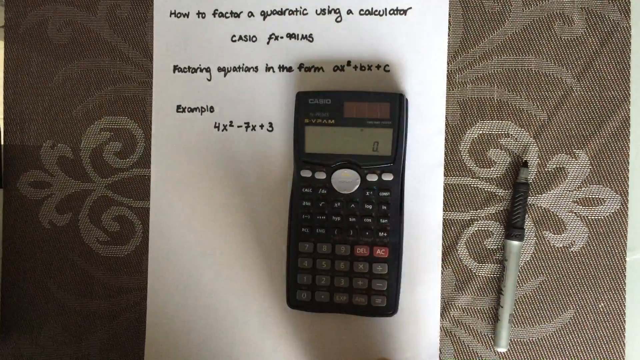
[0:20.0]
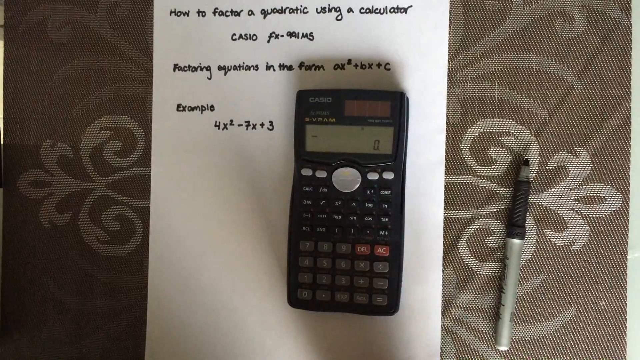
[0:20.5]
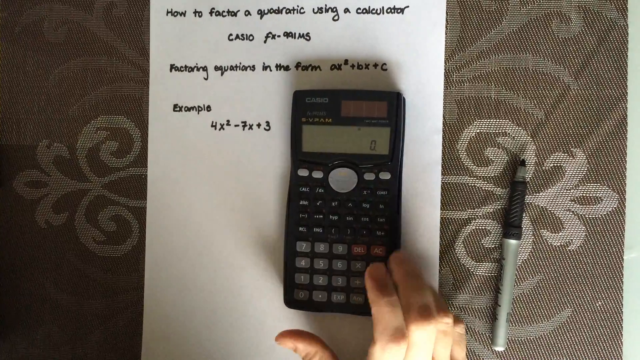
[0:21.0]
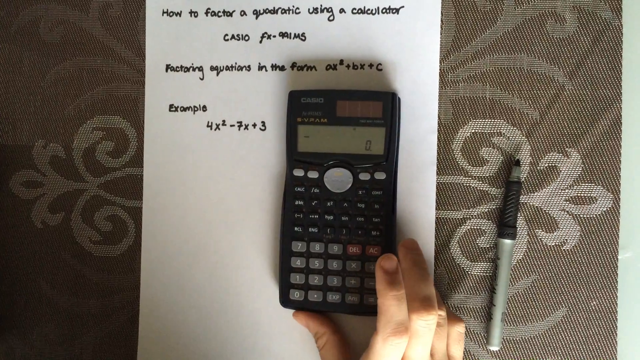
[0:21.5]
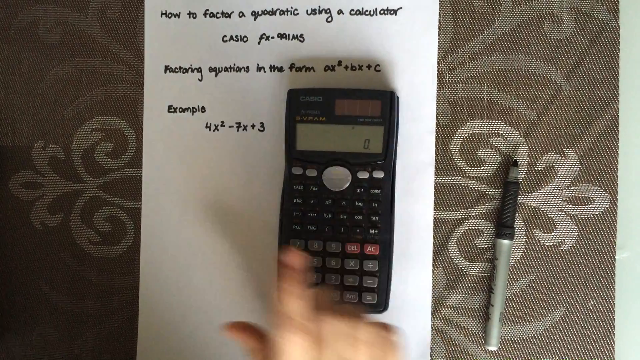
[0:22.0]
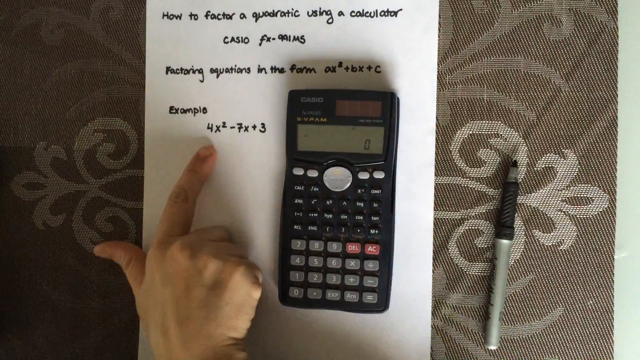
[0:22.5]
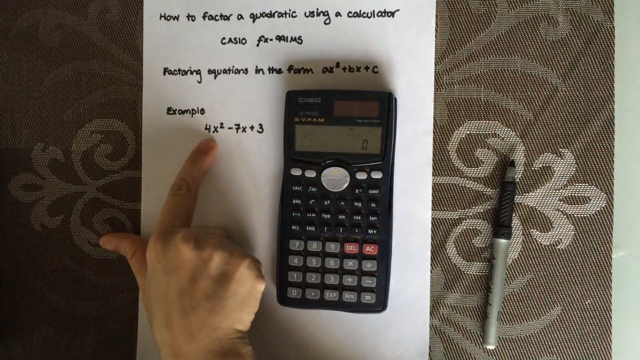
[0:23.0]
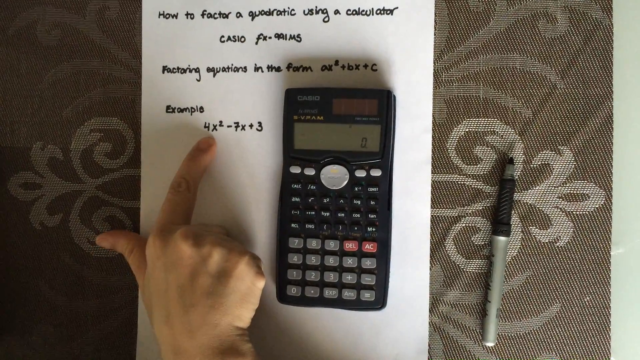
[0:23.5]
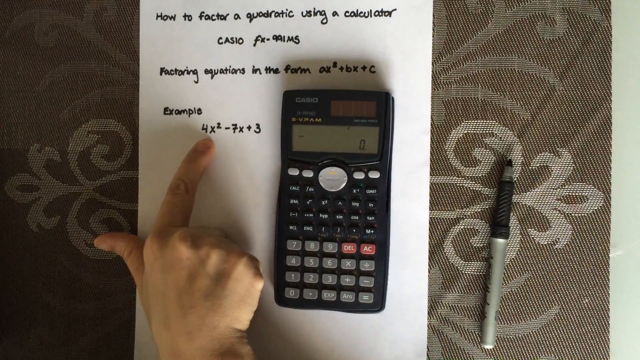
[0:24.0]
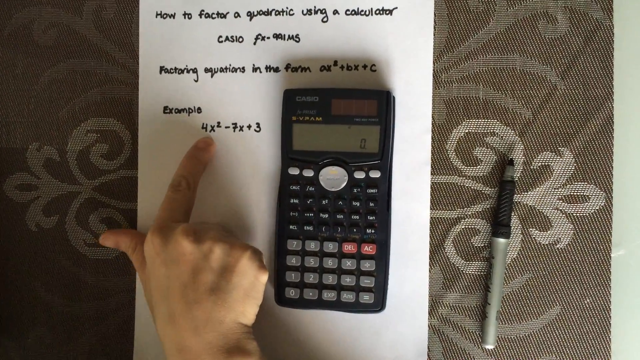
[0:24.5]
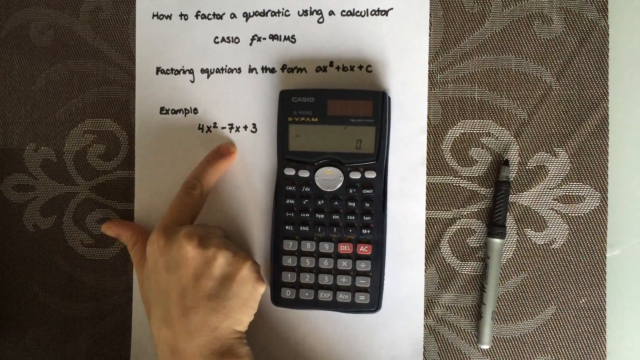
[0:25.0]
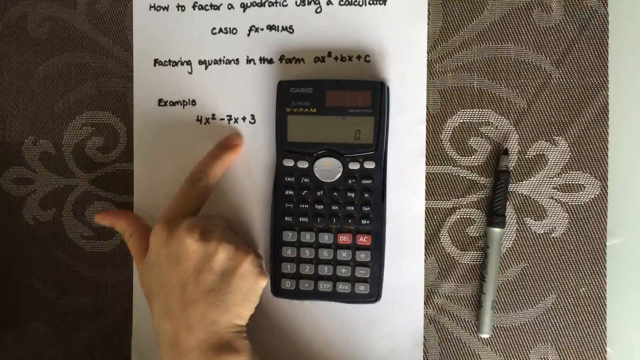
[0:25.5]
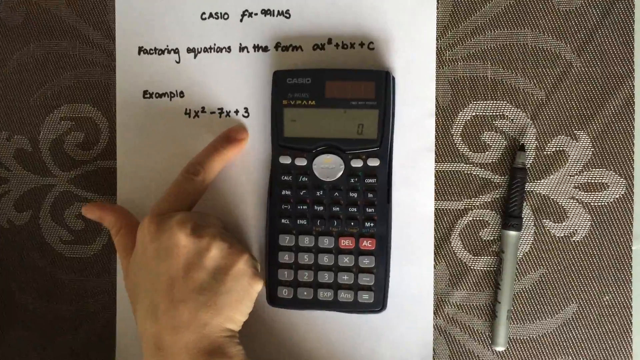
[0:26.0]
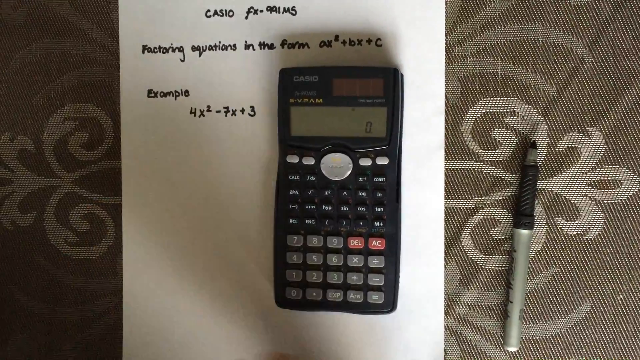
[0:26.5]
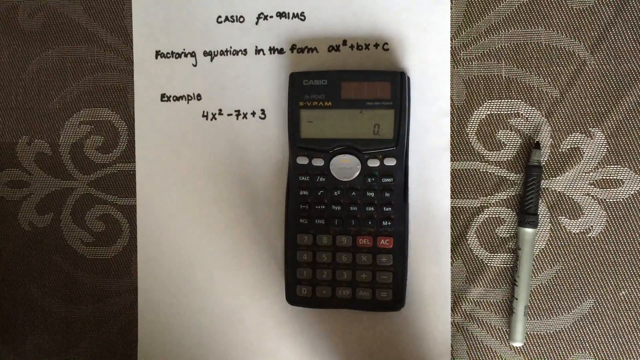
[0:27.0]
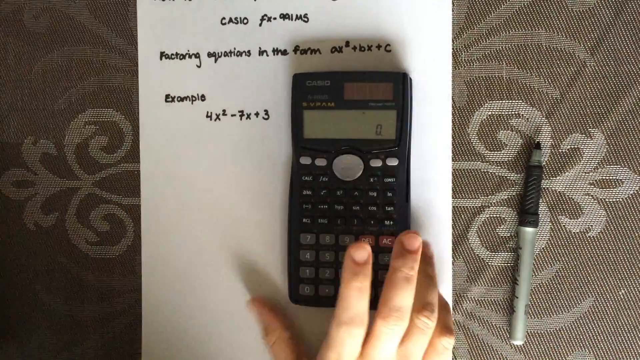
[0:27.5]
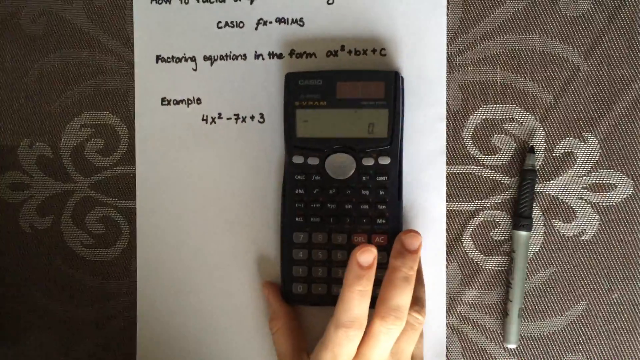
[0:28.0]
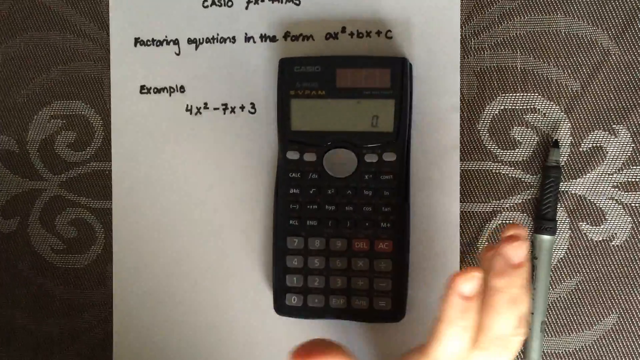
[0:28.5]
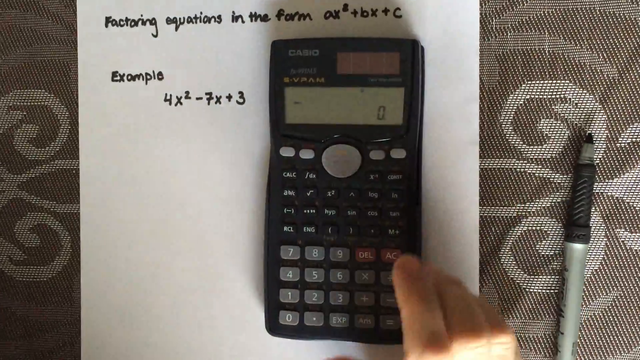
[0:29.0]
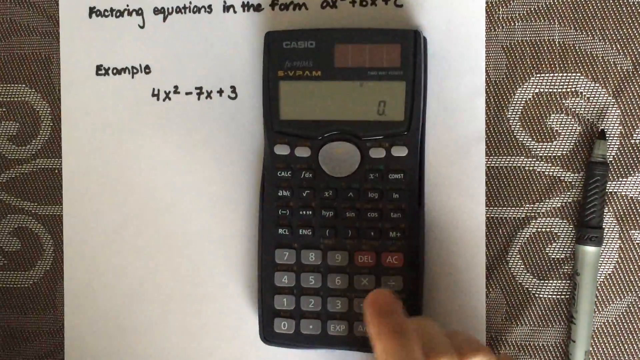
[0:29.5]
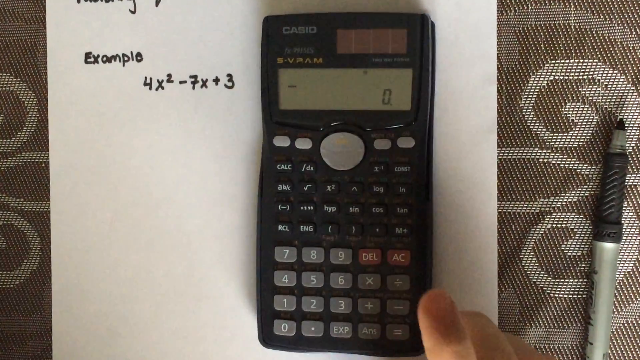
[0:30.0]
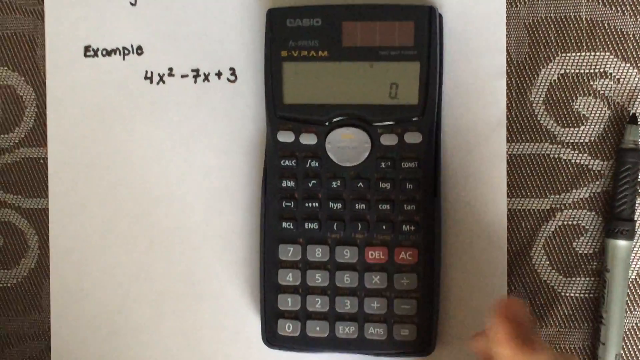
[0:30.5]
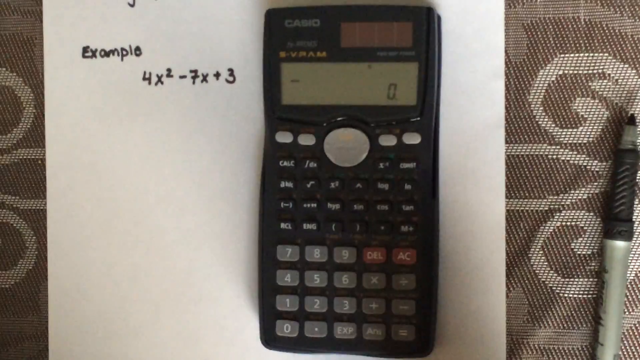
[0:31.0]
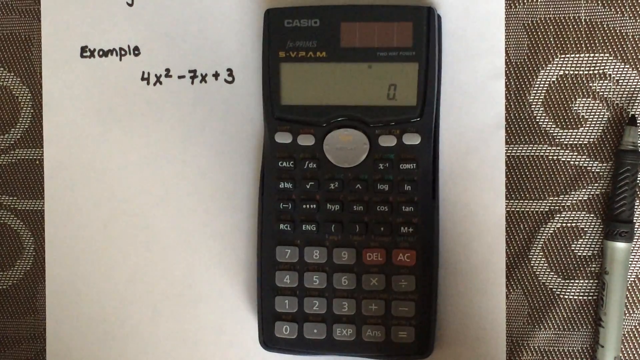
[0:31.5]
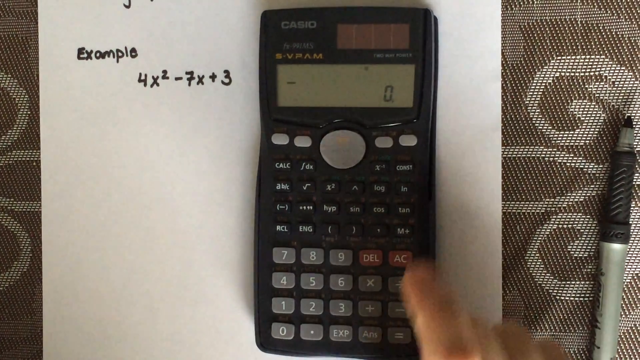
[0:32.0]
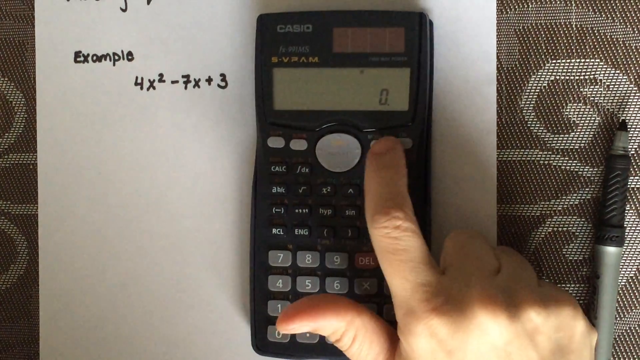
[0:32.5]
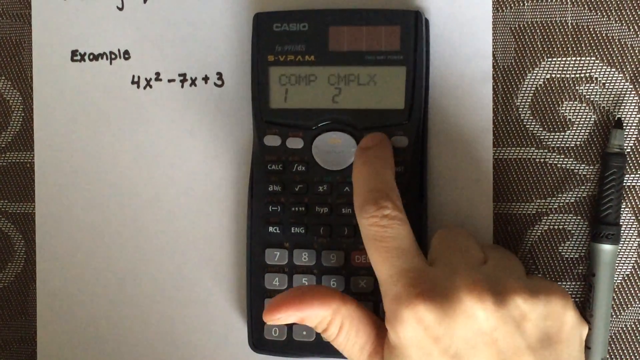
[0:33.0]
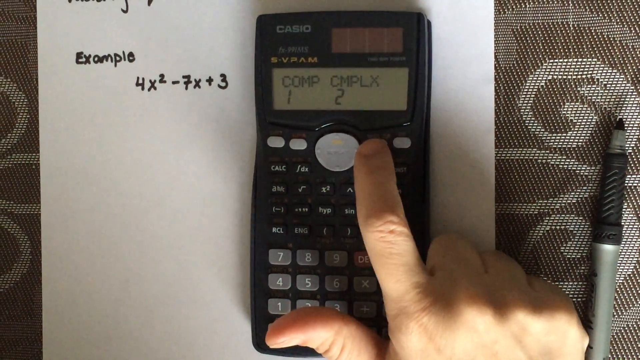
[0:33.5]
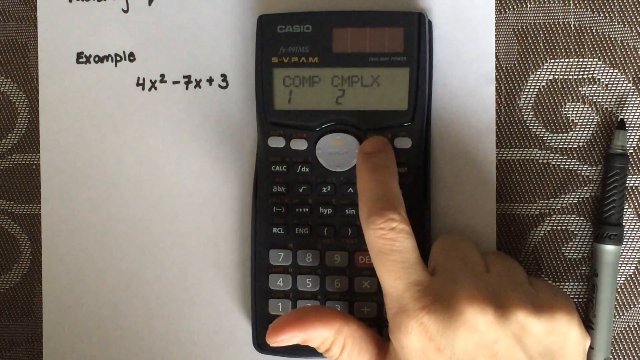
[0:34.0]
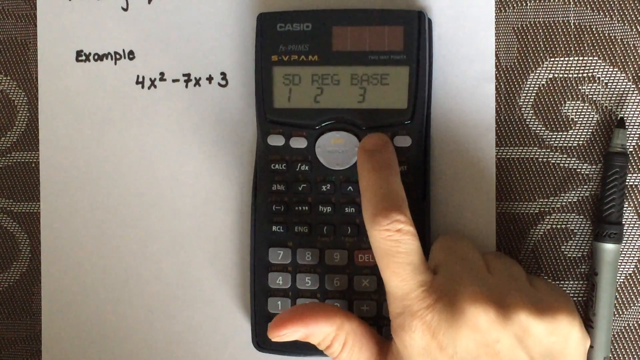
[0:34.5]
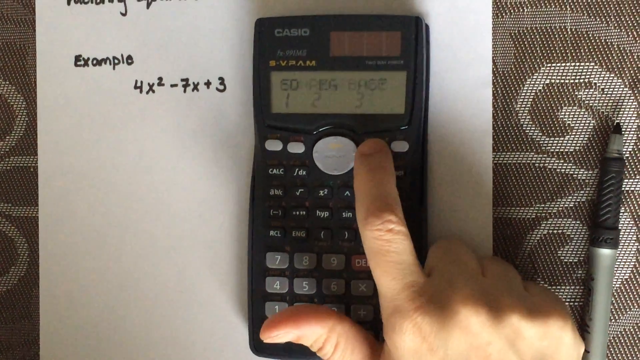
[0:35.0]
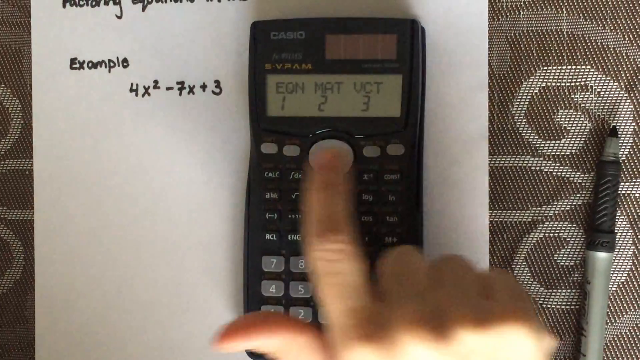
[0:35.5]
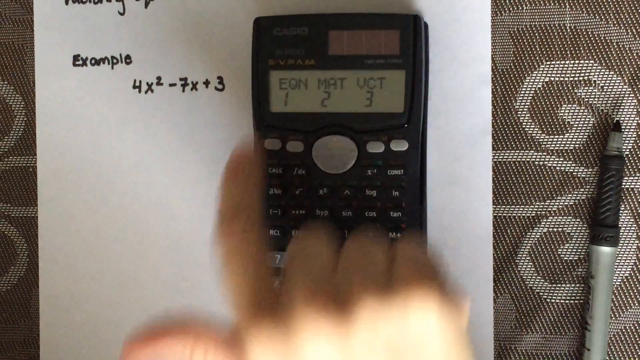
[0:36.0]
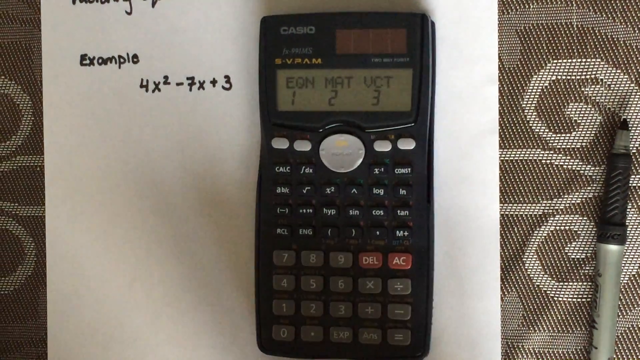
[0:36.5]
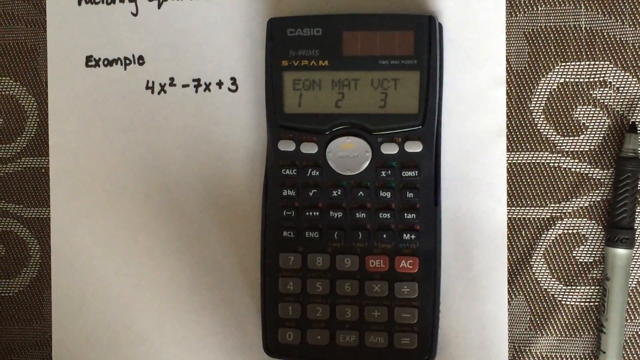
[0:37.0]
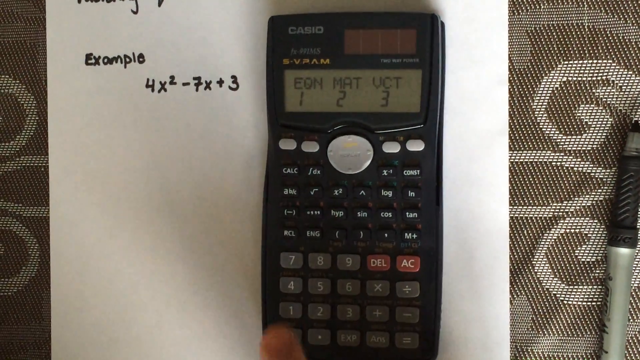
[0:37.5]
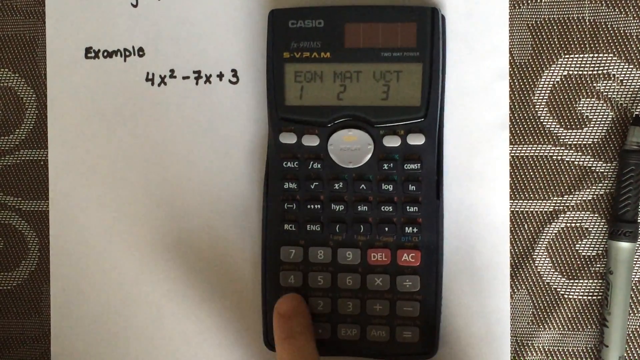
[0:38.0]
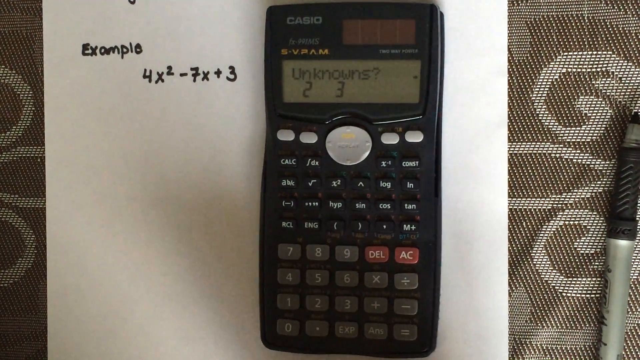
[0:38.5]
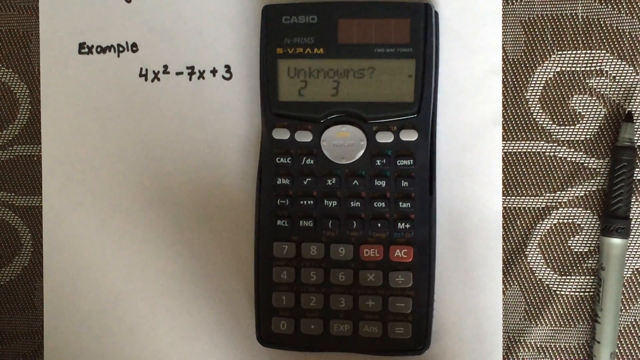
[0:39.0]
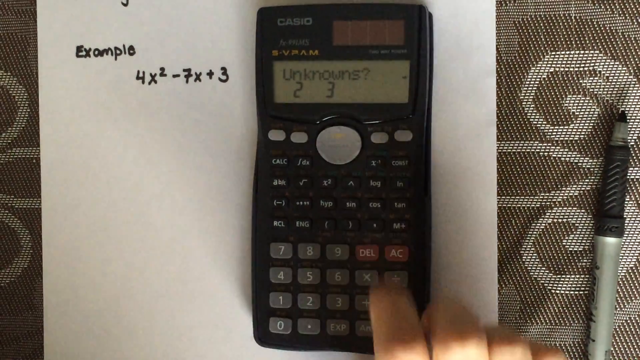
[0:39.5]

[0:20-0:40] The calculator appears to be a Casio and appears to be fairly old. It is lying on a paper that says "factoring quadratic equations" and gives an example written in black ink, 4x squared minus 7x plus 3. Text on the paper says "how to factor a quadratic using a calculator Casio FX-991 MS factoring equations in the form x squared plus b x plus c". It is a tutorial on factoring quadratic equations with this calculator. The paper is laid on a couch with a symmetrical design, and an uncapped pen with black ink is lying on it on the right-hand side of the screen.